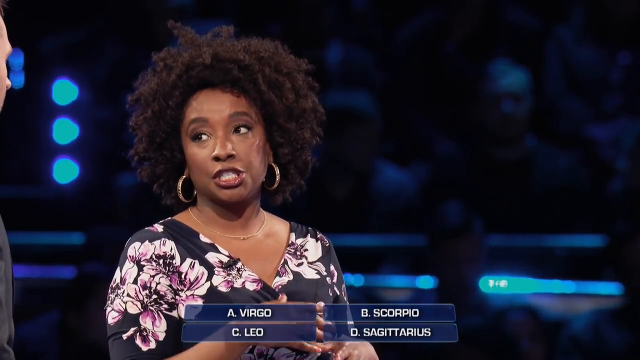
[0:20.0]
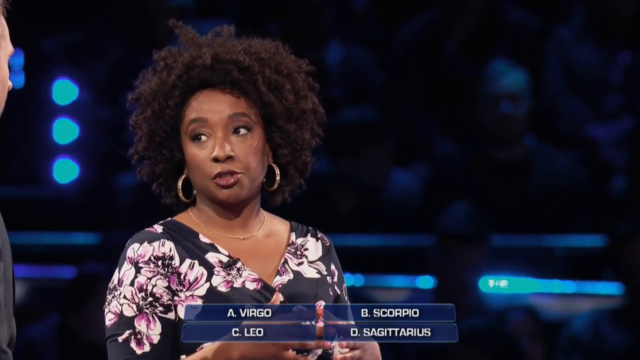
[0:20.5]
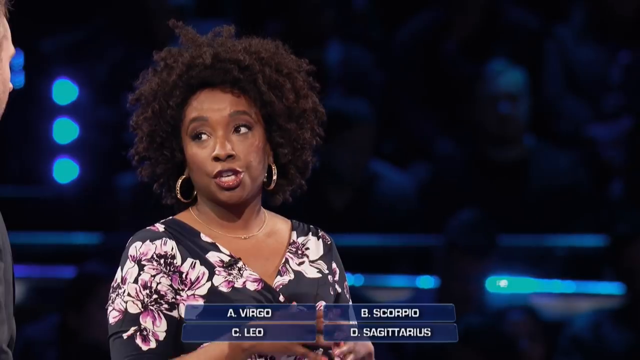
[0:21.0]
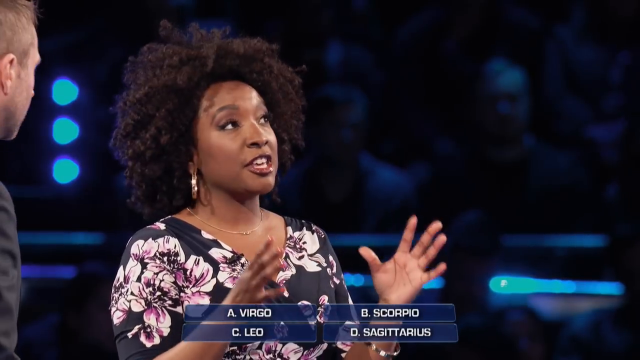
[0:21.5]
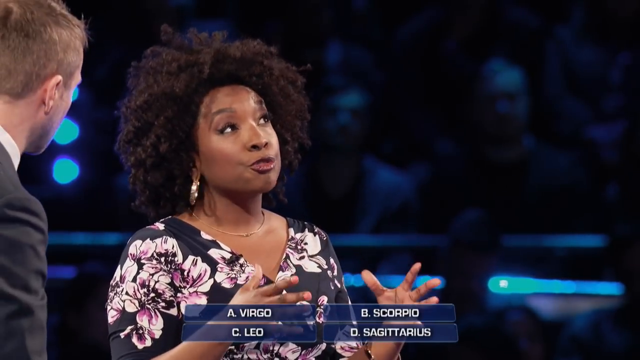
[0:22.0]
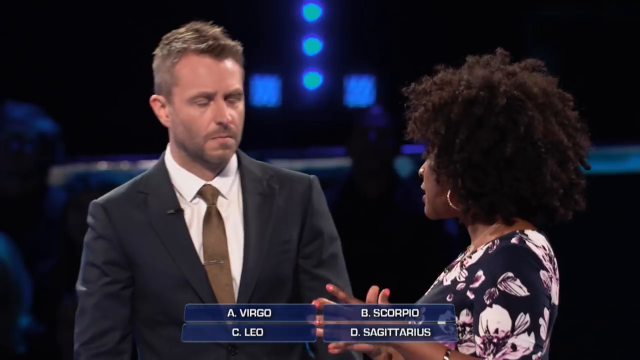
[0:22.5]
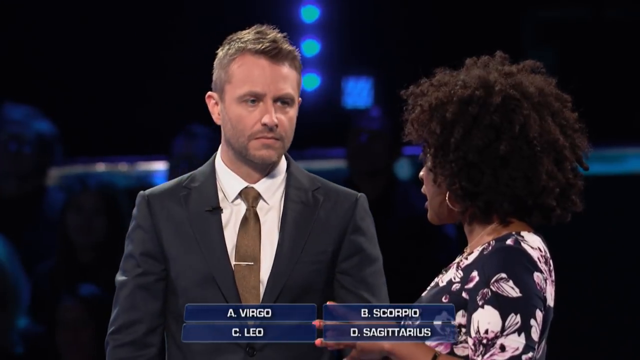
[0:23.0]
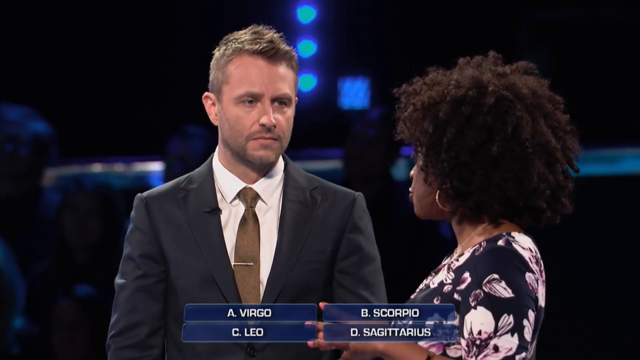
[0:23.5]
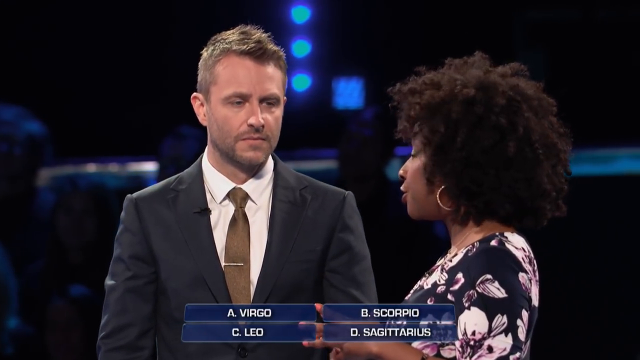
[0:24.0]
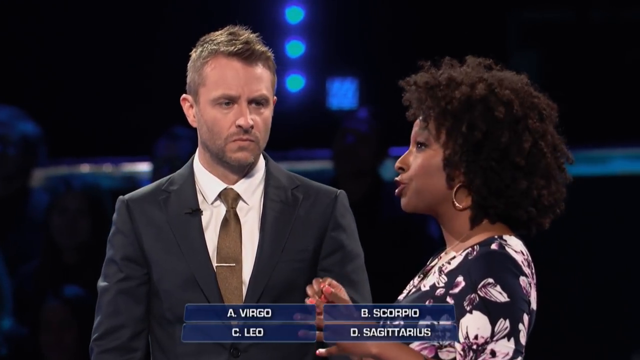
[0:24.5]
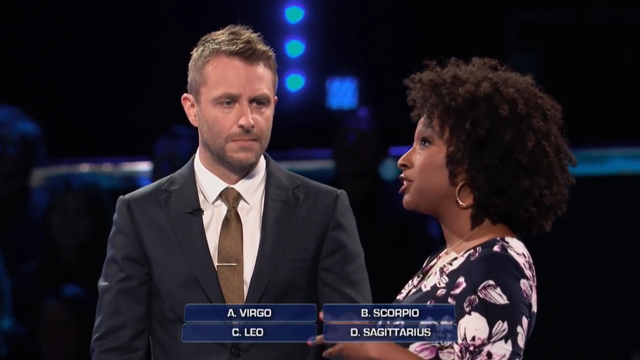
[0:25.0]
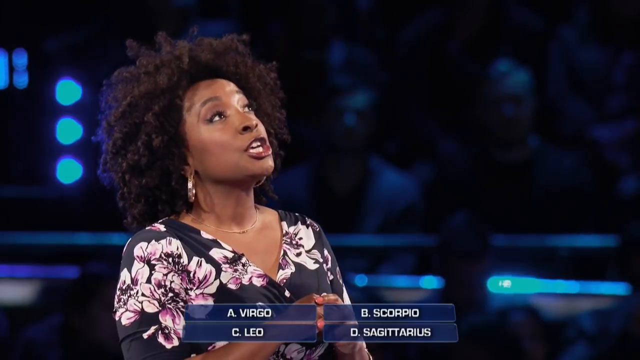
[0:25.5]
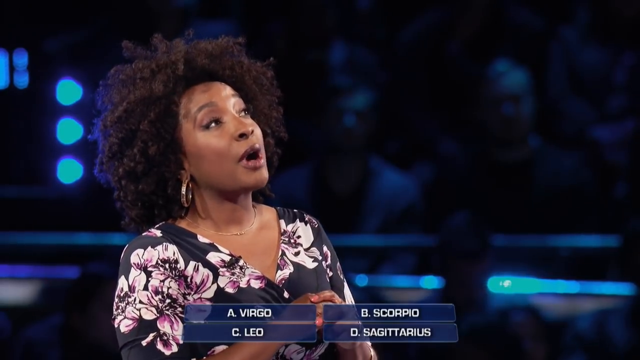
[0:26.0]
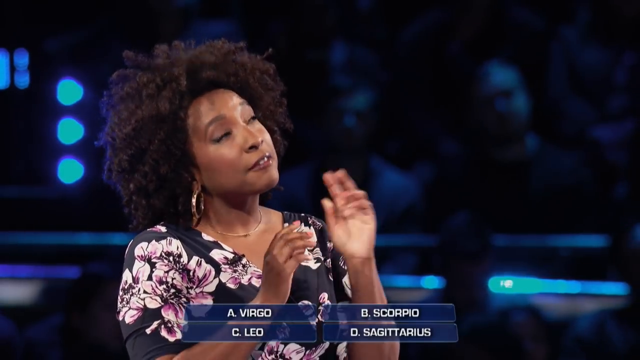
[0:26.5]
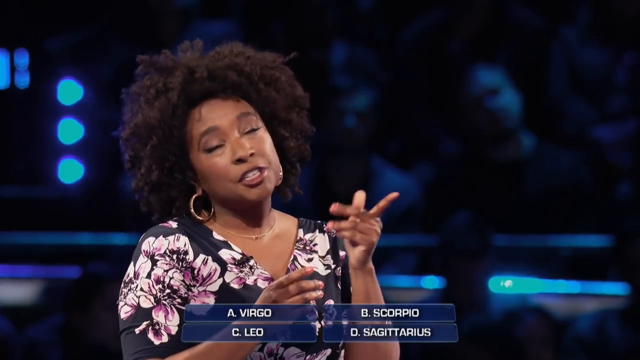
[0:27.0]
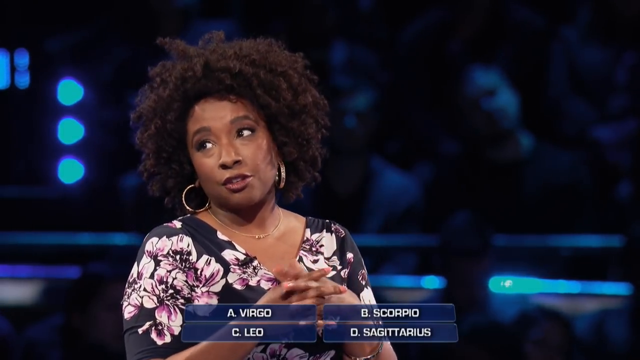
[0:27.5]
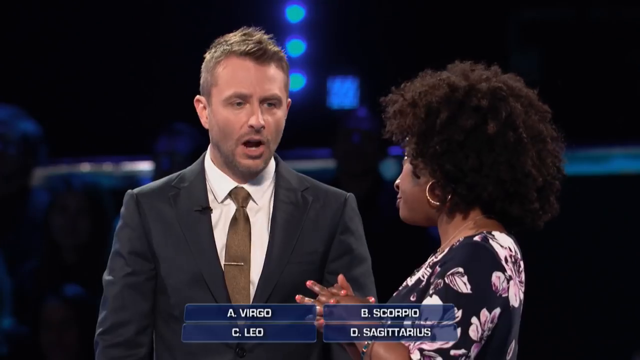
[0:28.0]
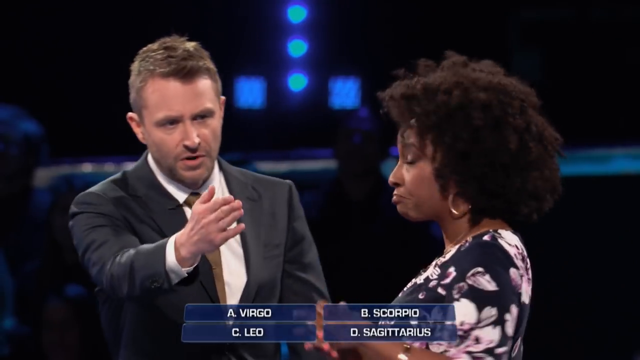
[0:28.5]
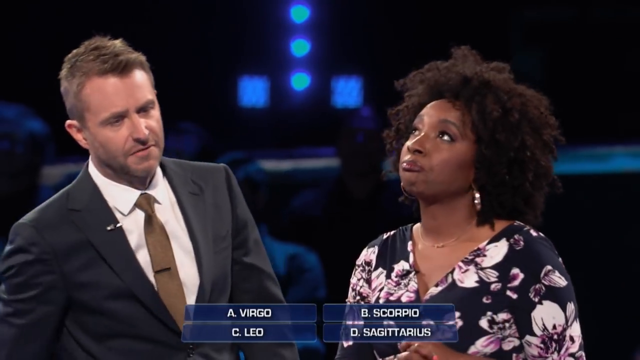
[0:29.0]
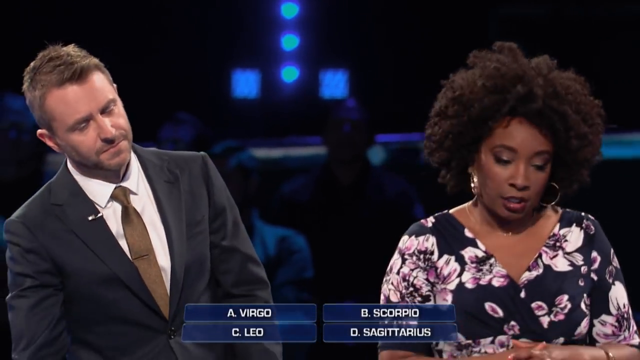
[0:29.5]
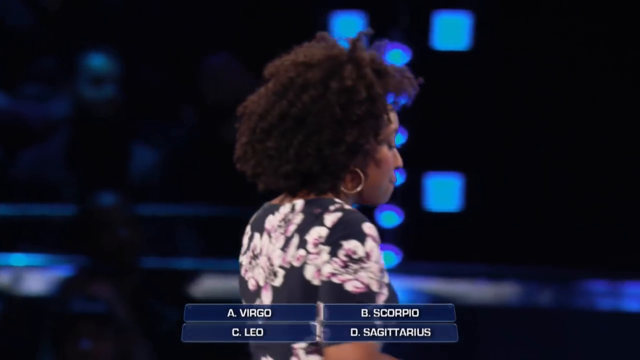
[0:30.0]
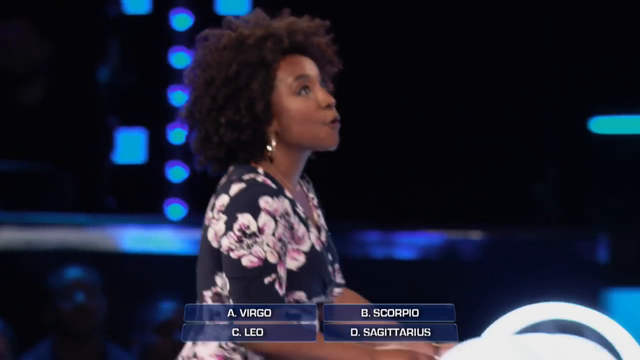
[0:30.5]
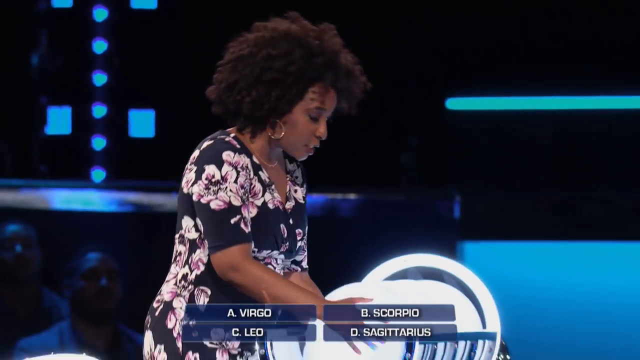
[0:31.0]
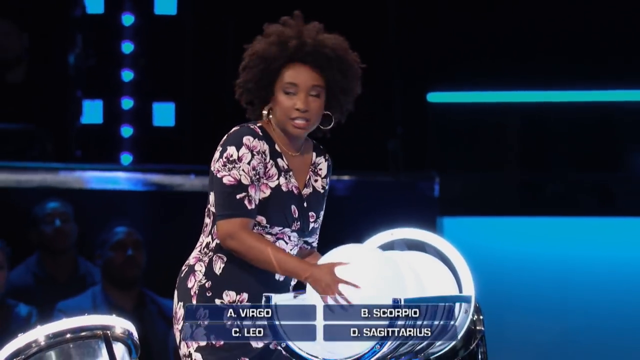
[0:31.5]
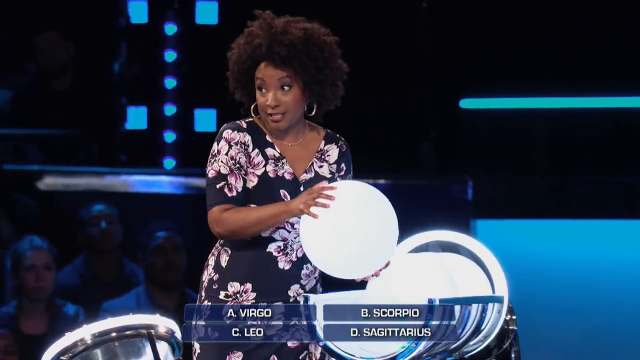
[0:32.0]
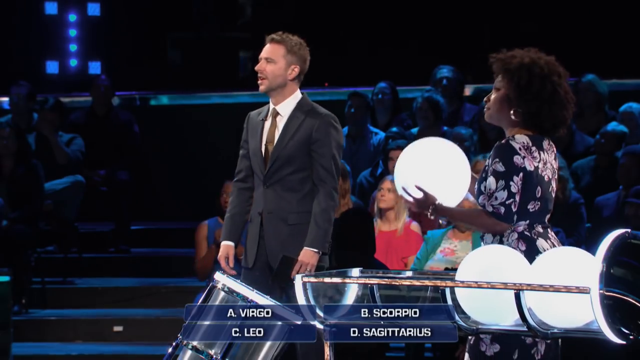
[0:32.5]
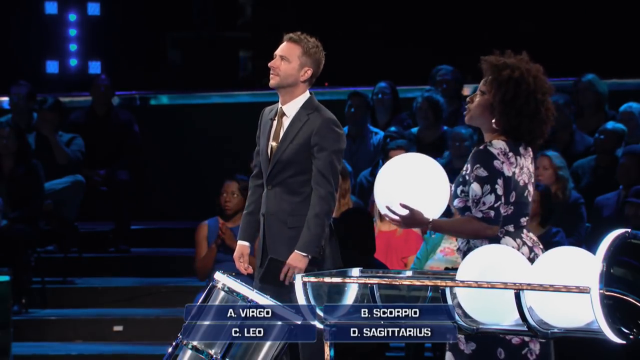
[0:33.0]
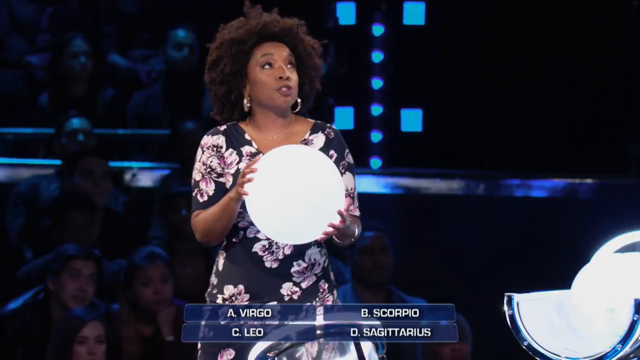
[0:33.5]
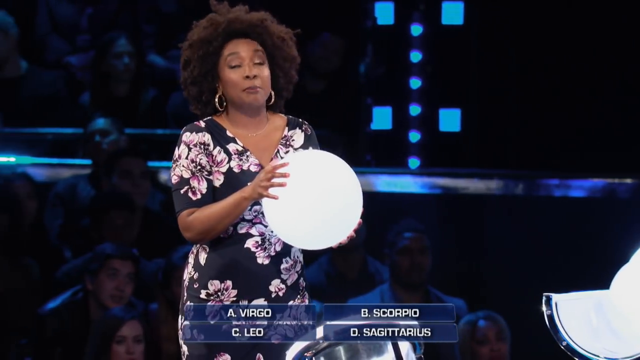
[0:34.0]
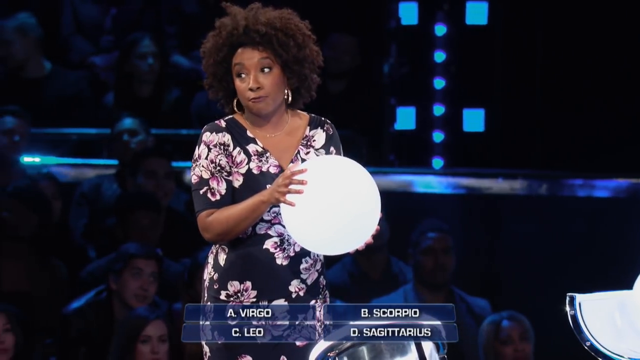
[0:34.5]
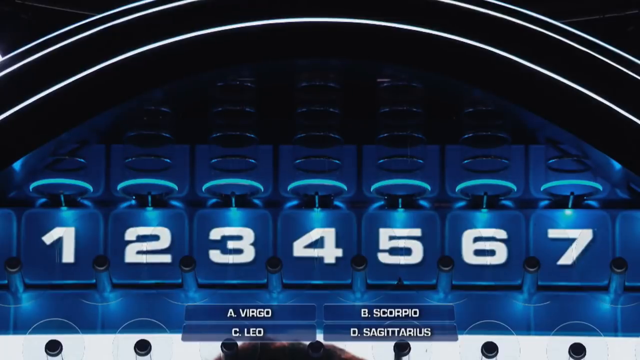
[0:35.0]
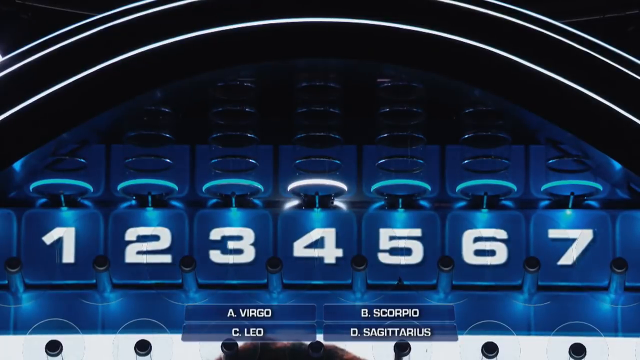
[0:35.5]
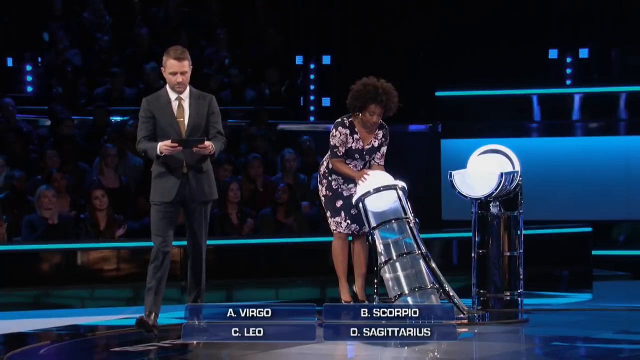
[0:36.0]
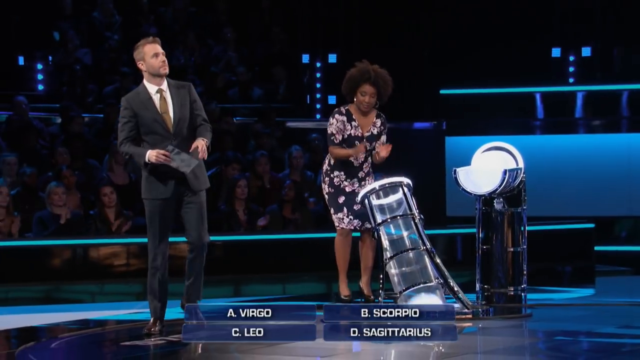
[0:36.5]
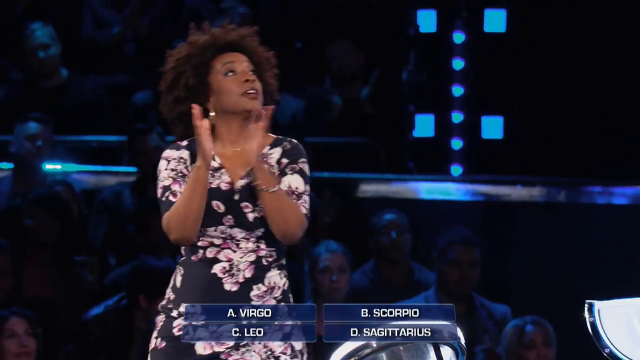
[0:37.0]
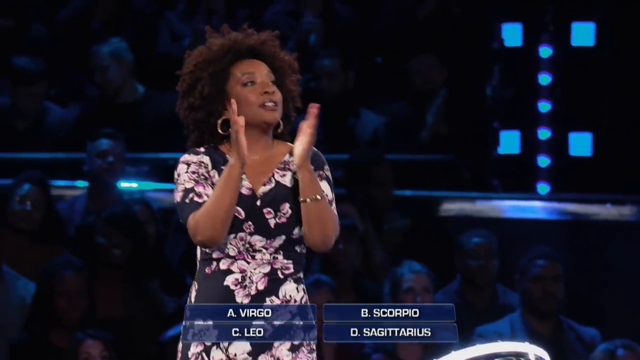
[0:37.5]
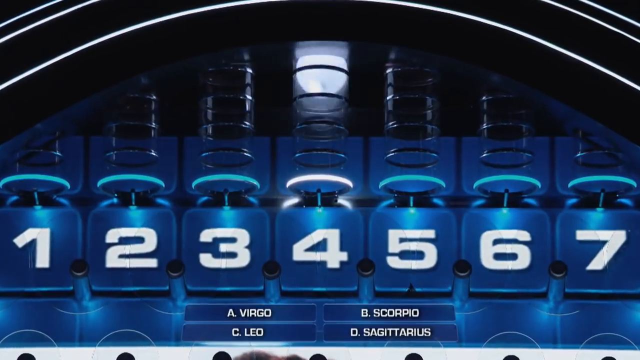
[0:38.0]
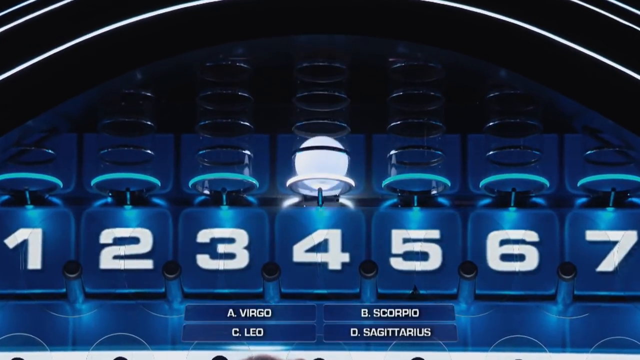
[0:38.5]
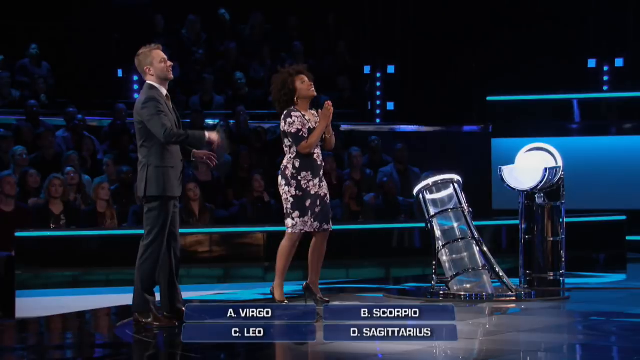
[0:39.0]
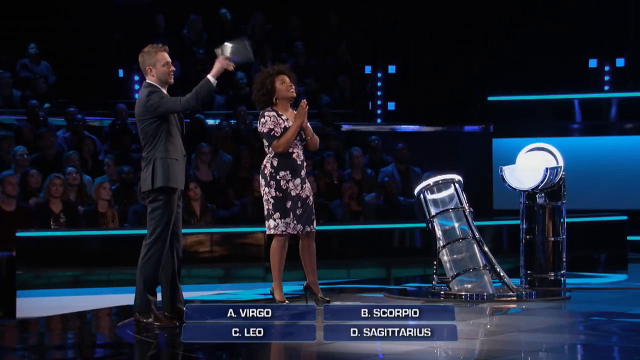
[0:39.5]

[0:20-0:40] The Black woman, wearing a flower dress and earrings, talks to the male talk show host, making expressions with her hands while the white male host looks right at her. The host wears a suit with a brown tie and a white shirt underneath. The woman keeps talking as she points at the screen in front of them. The host responds with a welcoming gesture of his right hand, directing the woman to grab some sort of white ball. The screen in front of them shows the numbers 1 to 7. The woman places the white ball in some sort of vacuum tube and starts to clap. The screen with the numbers 1 to 7 appears again, and the ball lands in the number 4.